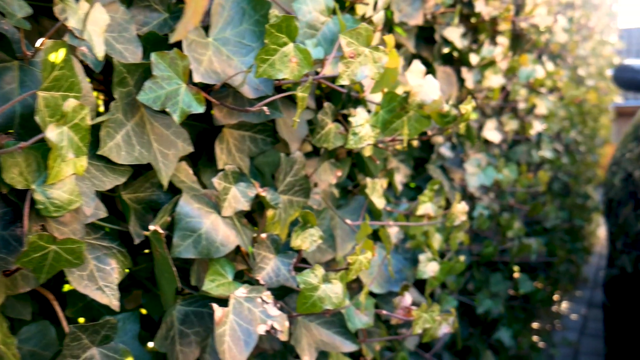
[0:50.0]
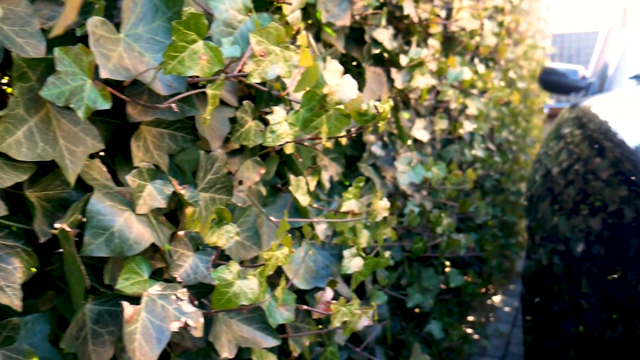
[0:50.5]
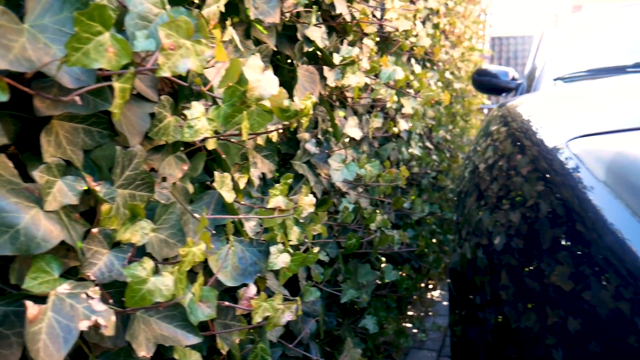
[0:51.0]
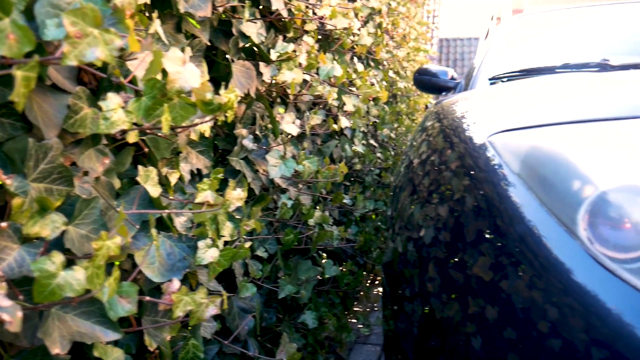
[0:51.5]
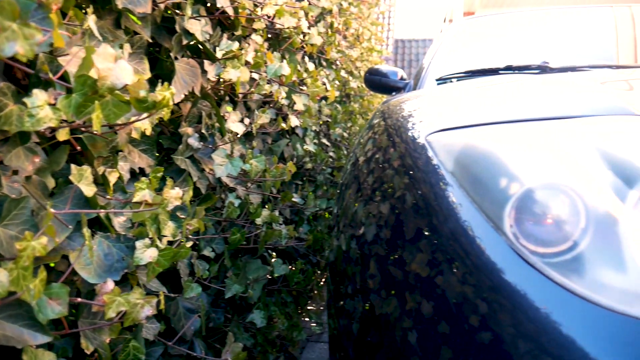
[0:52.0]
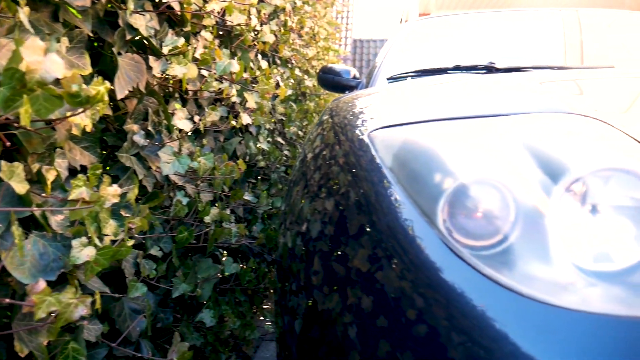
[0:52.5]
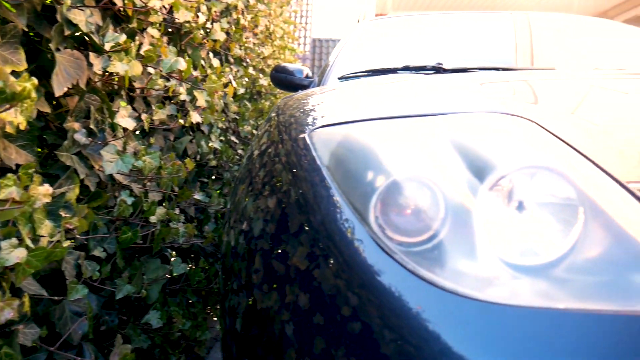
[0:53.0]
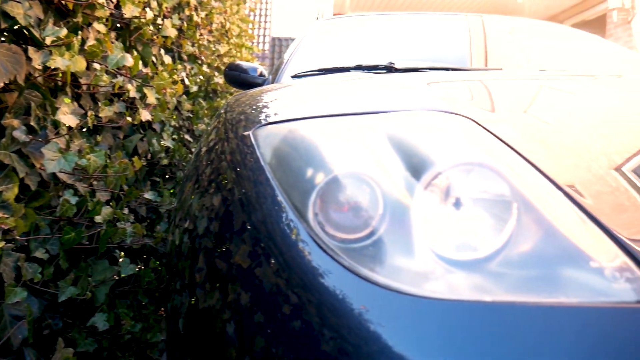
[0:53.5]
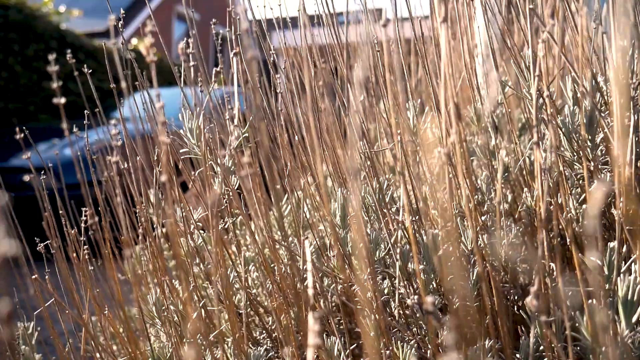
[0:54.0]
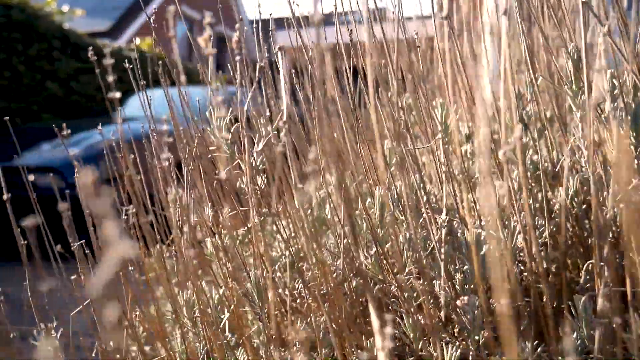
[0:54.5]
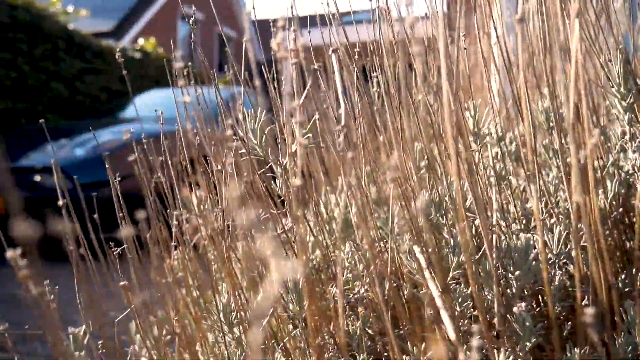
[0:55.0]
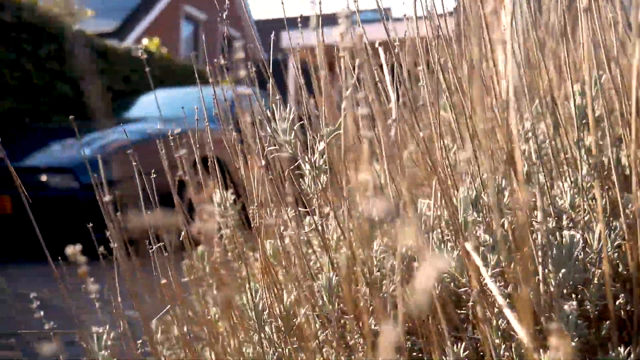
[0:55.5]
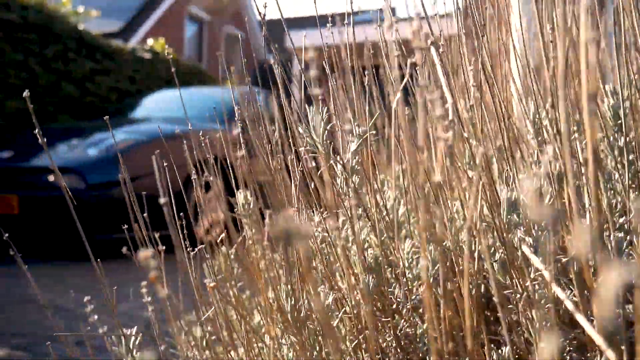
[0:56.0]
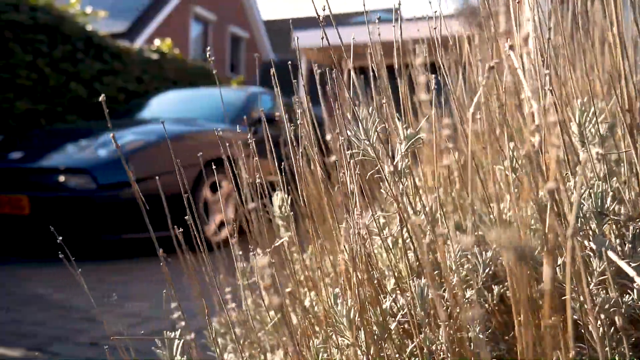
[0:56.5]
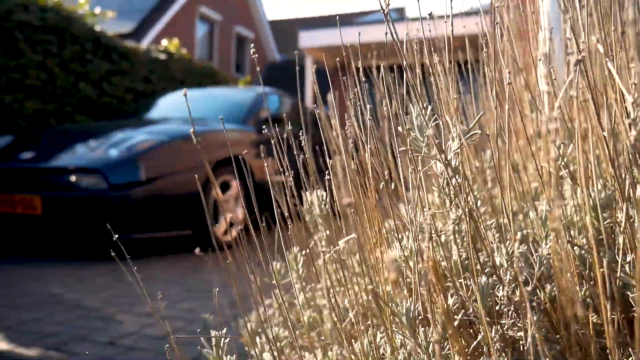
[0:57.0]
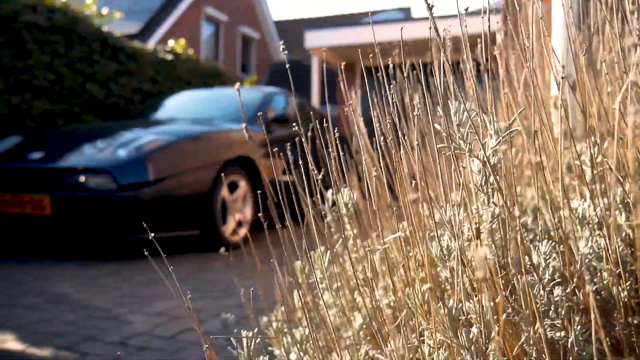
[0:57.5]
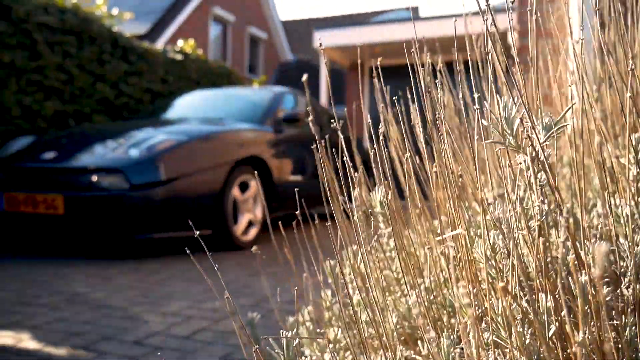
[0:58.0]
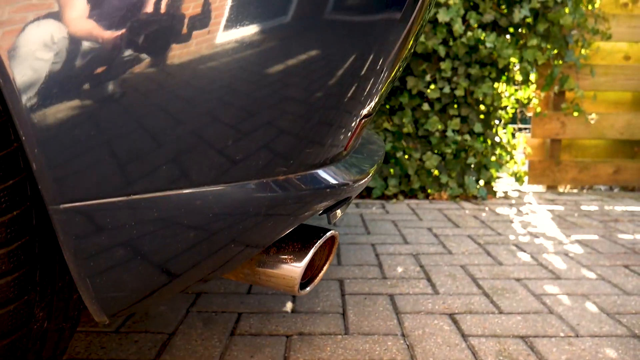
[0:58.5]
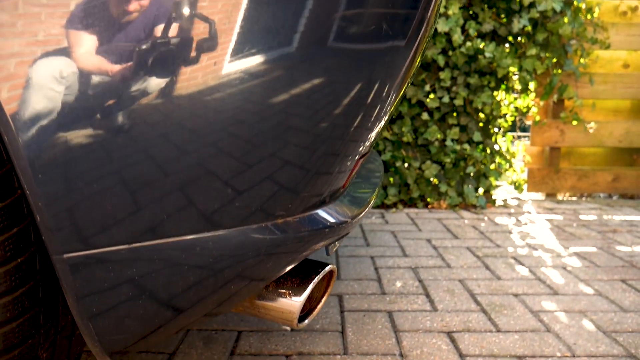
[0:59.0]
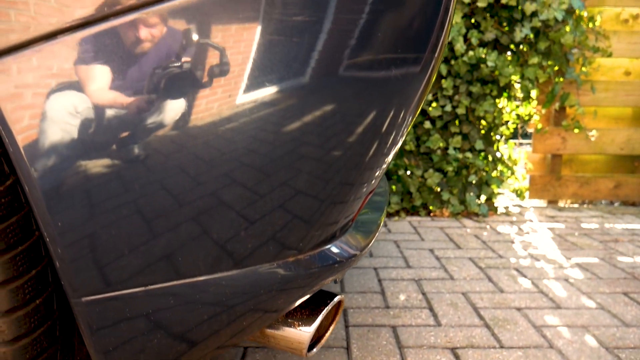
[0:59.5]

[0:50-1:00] A close-up of an ivy wall shows a car parked right next to it; it looks like some type of sports car. Its headlight has two different bulbs in it. The same car is shown from a different angle, filmed through some type of bush with brown stems and no leaves, and the camera kind of swings around so the car starts to come into clear view. The exhaust of the car is shown, and the person filming is visible in its reflection. The car is parked on pavers.